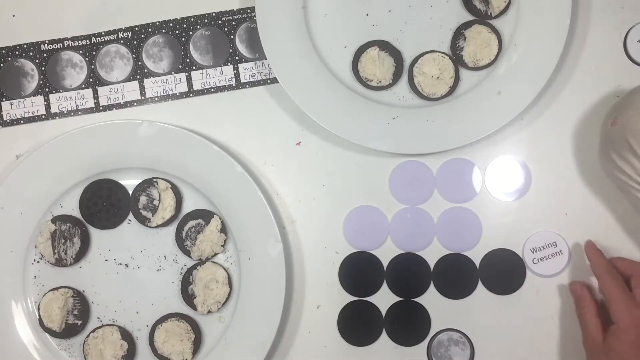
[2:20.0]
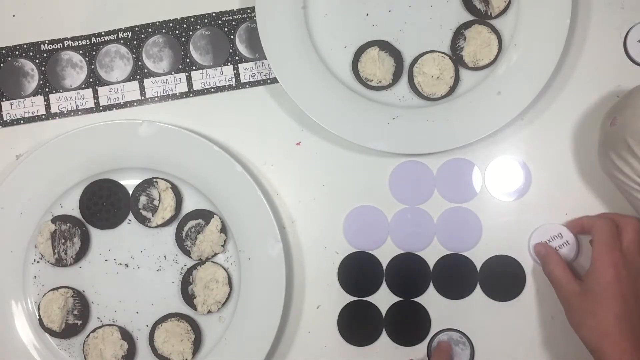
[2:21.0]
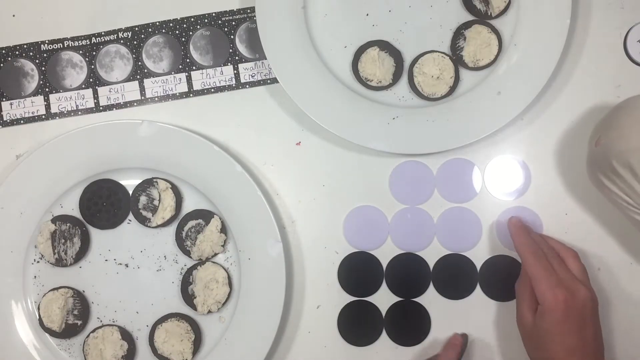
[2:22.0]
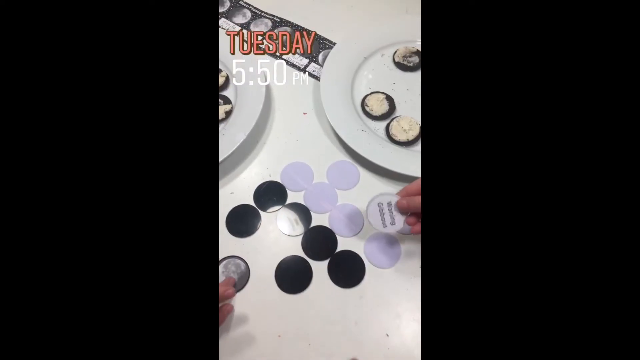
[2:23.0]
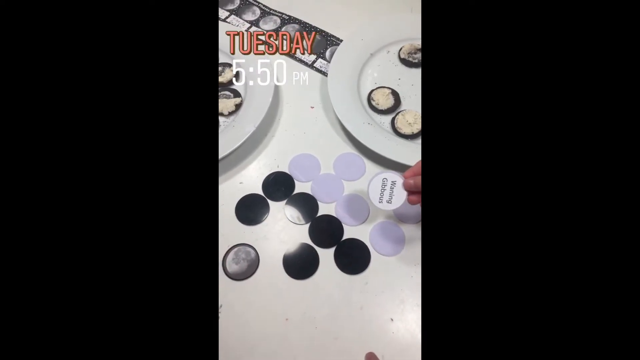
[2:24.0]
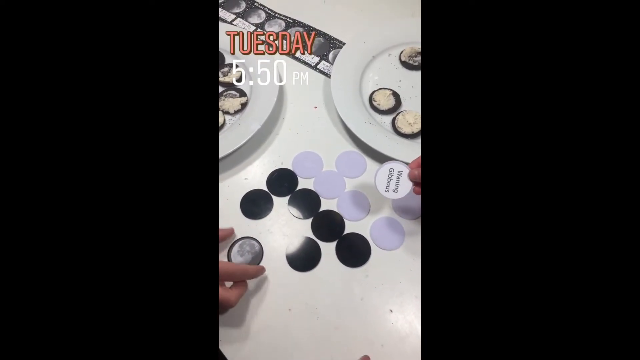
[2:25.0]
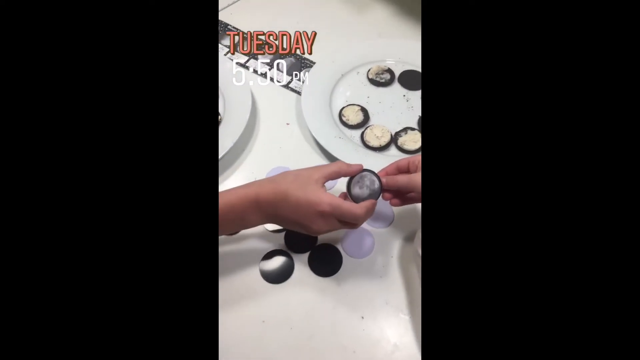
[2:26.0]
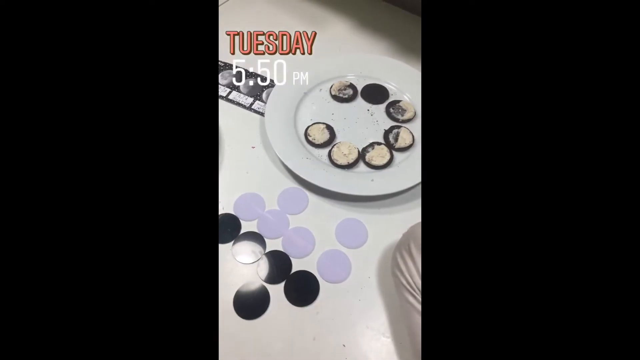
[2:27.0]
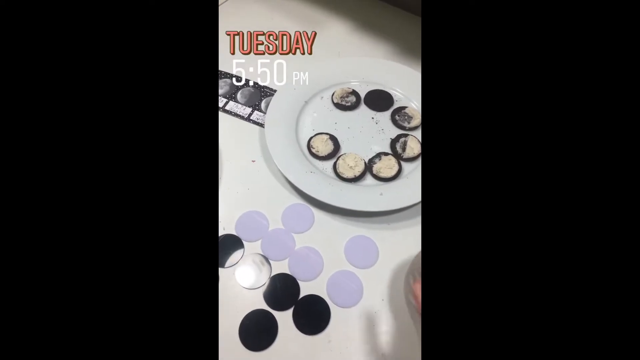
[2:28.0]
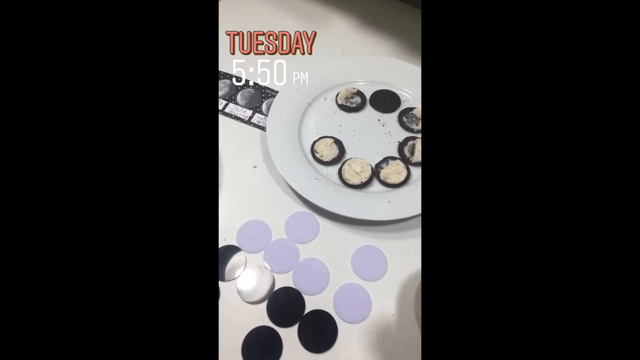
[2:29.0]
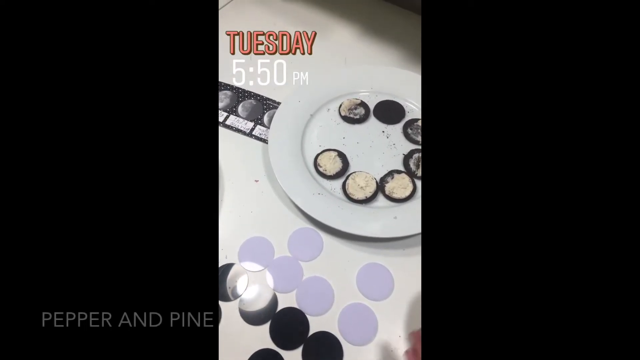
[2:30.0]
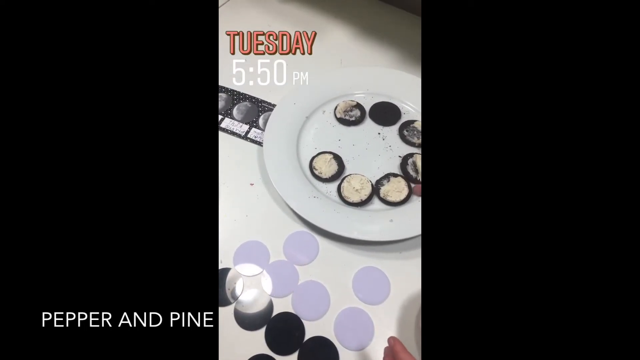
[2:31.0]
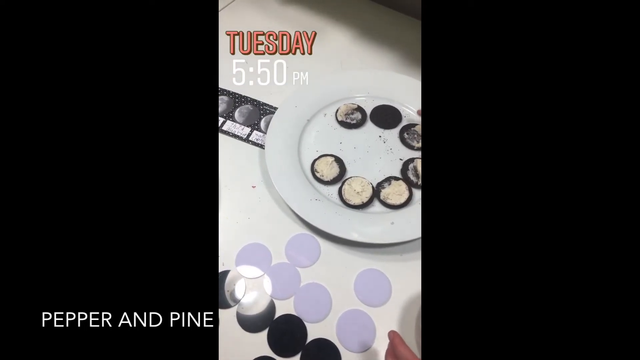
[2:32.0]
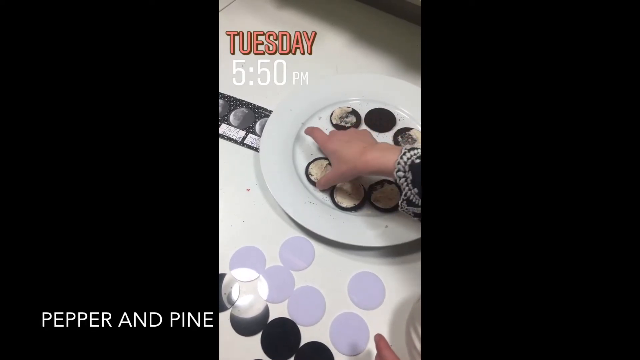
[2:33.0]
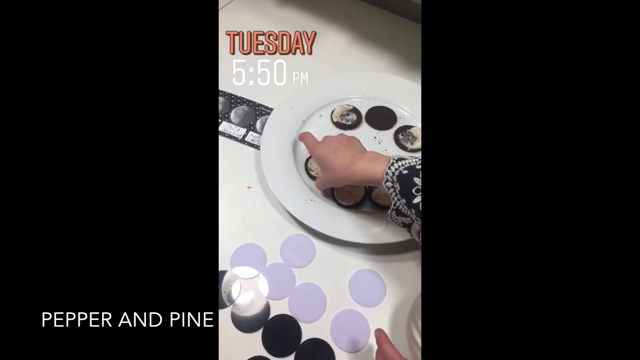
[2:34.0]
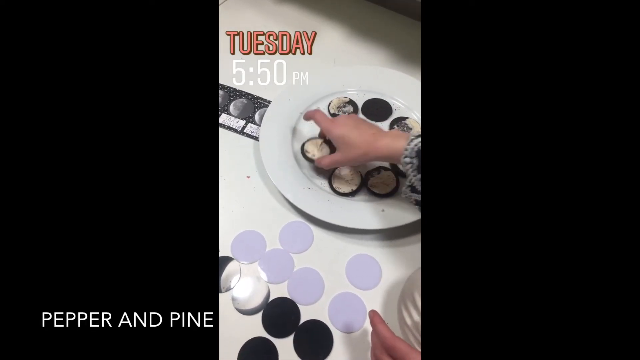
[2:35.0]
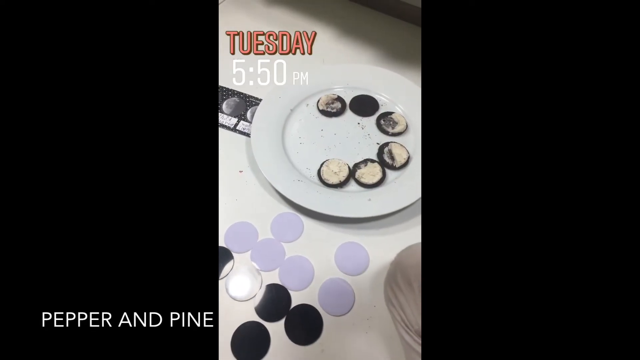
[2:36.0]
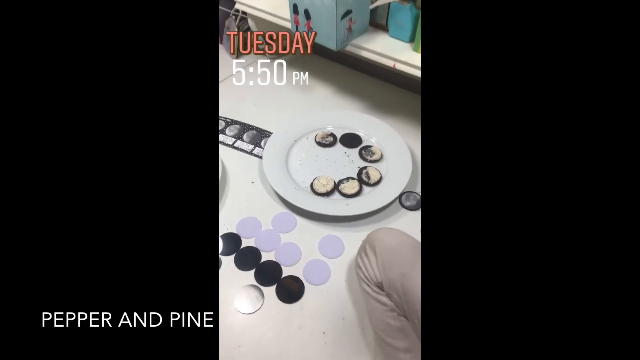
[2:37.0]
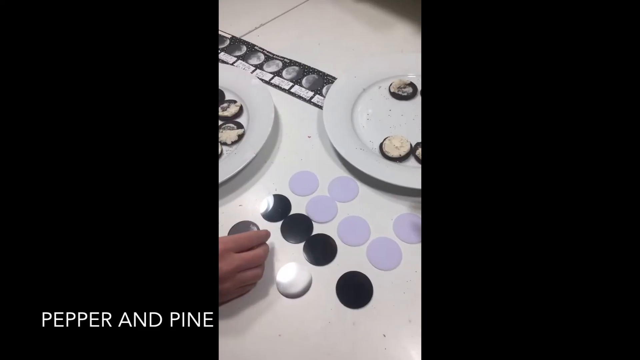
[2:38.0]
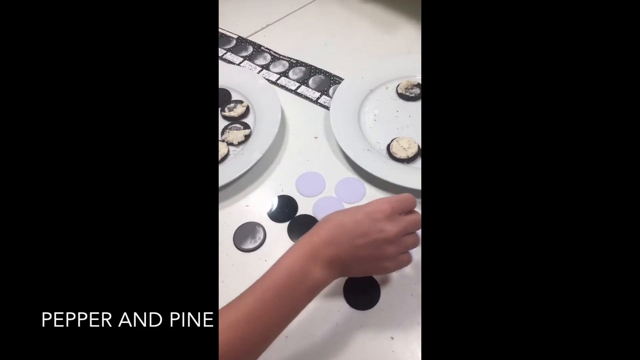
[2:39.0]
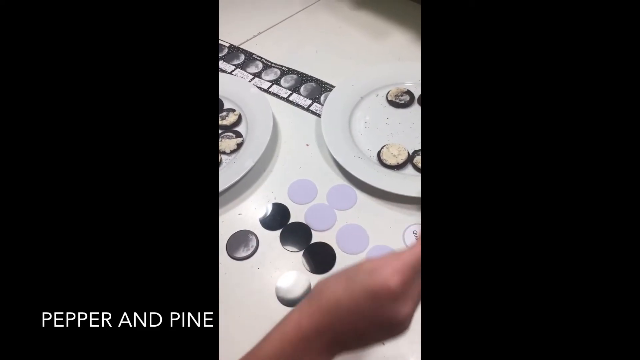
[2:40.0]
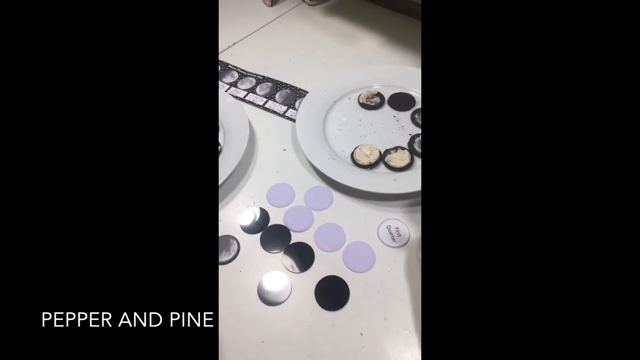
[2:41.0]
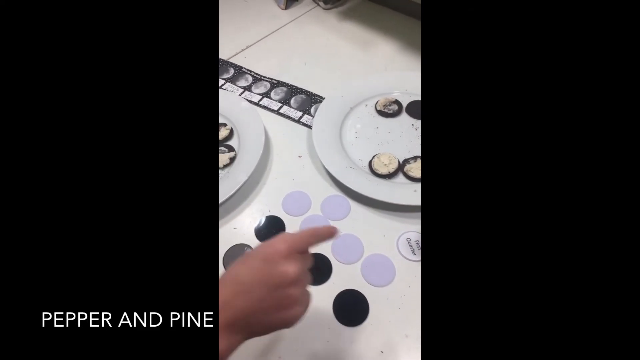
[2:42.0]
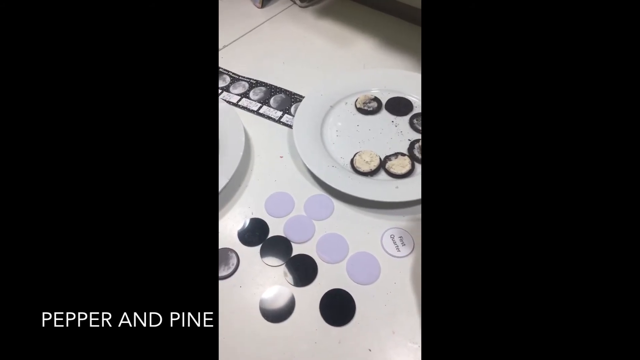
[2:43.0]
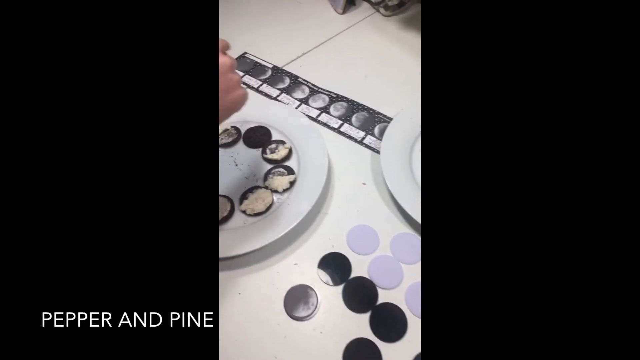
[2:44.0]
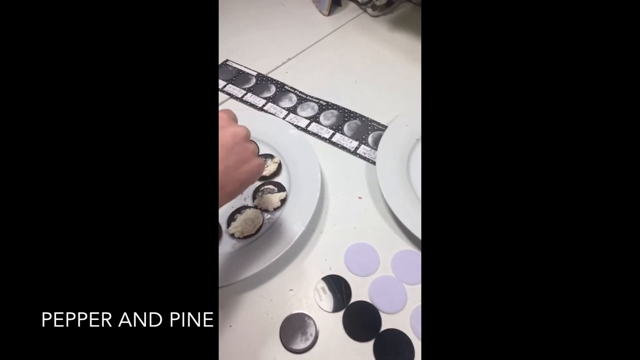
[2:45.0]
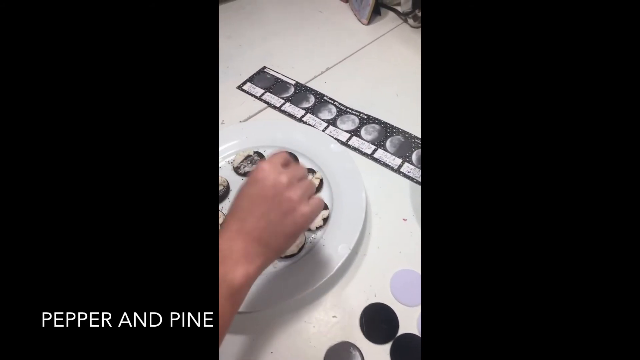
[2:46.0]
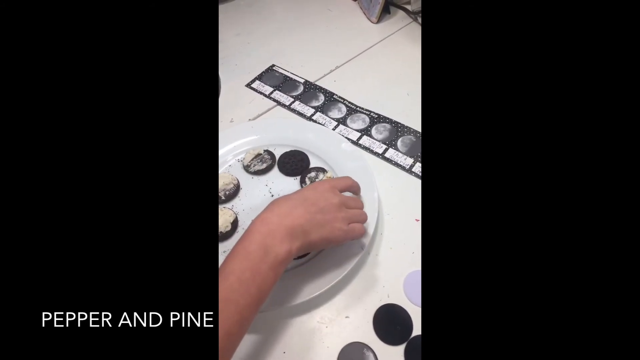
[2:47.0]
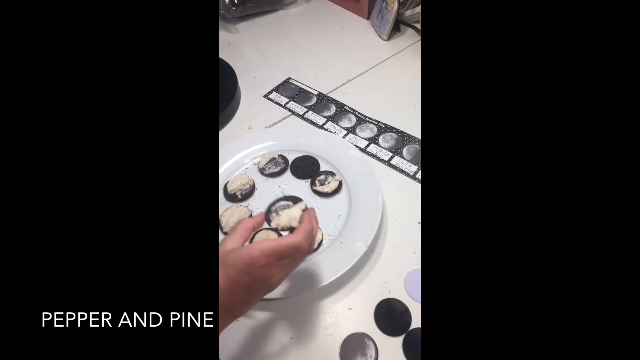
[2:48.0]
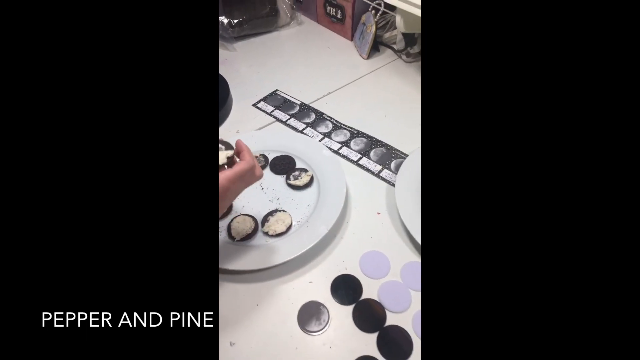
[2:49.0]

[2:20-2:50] The camera is pulled back somewhat and the editing seems to have changed; text at the top left of the video says "Tuesday, 5.50 p.m." The disks with the phases of the moon written on them are being flipped over, and the cookies are set on top of the disks, apparently matching each cookie's shape to the phase on the flipped disk. The goal may be to cover every disk with a cookie.